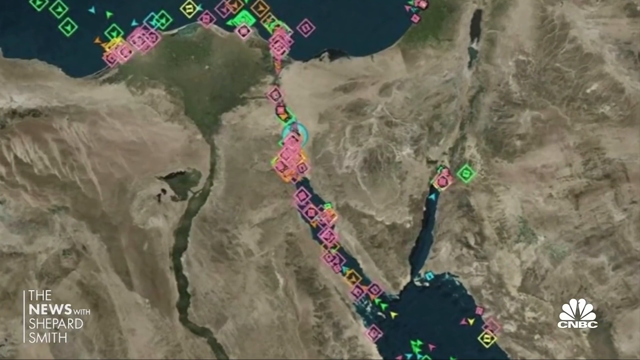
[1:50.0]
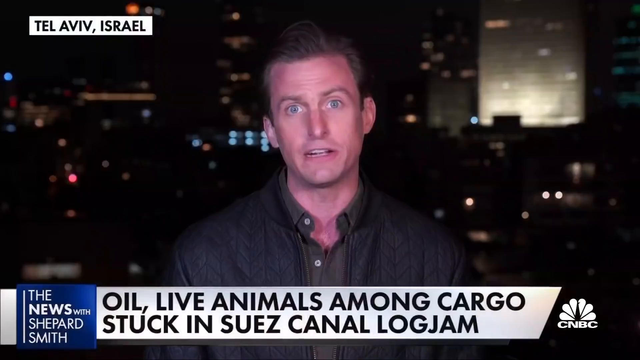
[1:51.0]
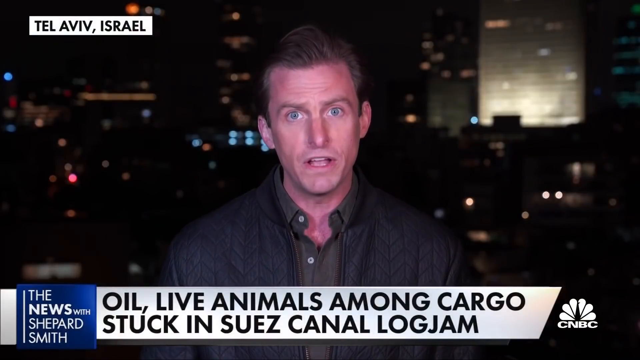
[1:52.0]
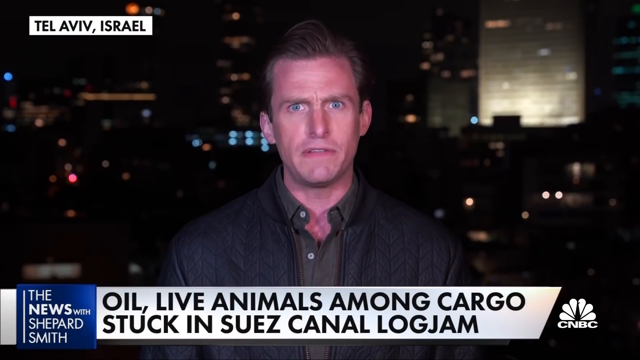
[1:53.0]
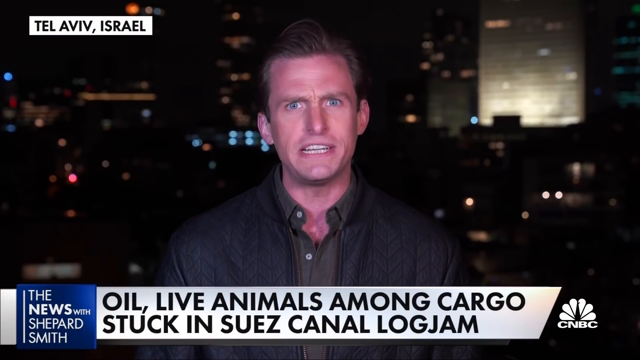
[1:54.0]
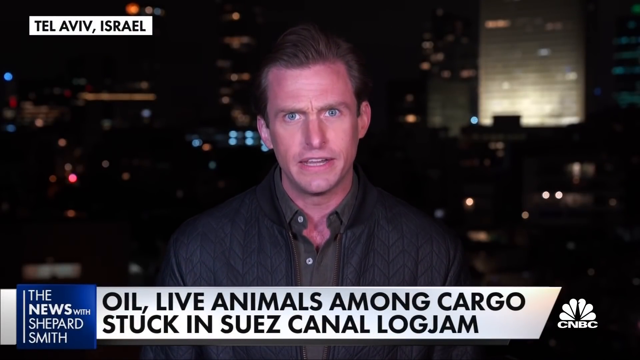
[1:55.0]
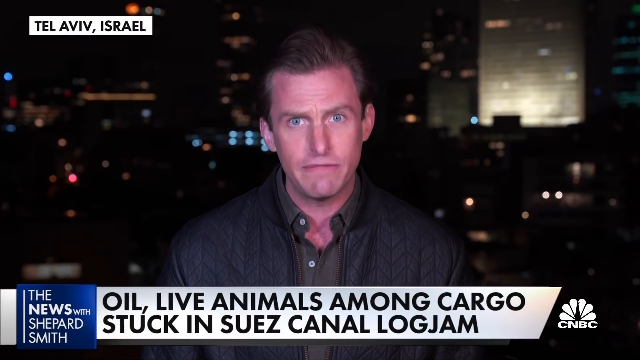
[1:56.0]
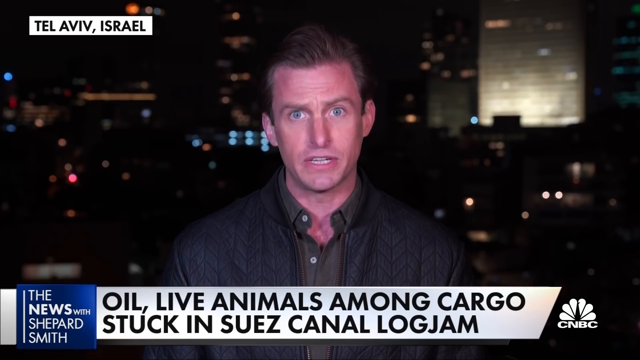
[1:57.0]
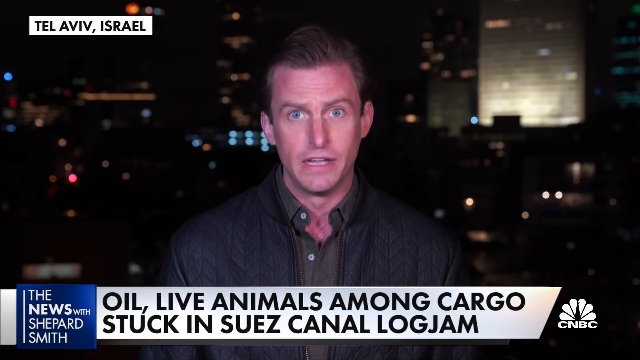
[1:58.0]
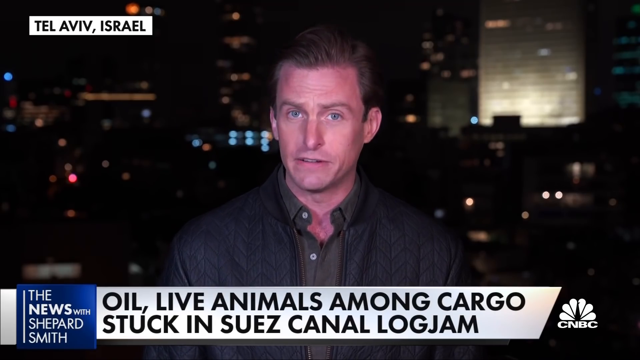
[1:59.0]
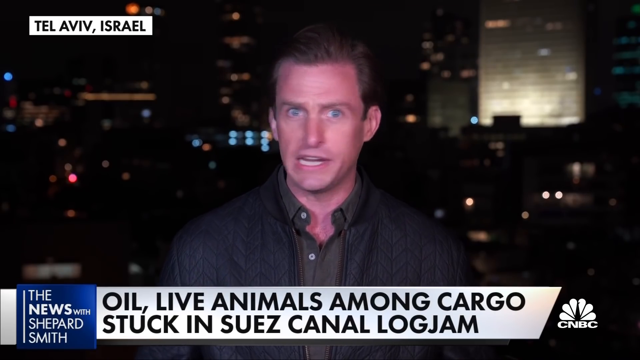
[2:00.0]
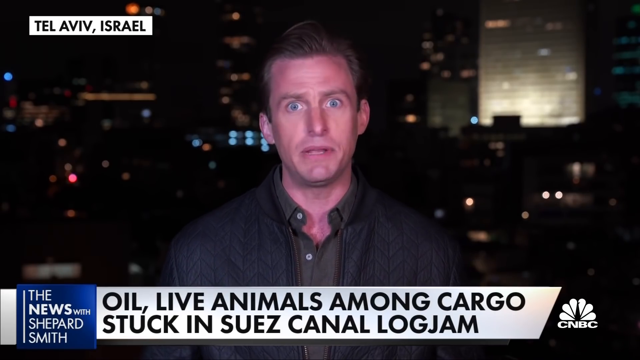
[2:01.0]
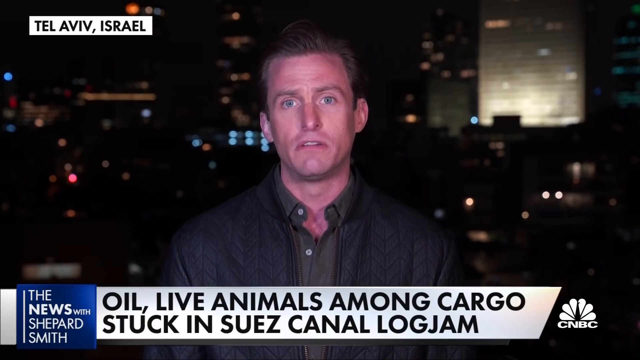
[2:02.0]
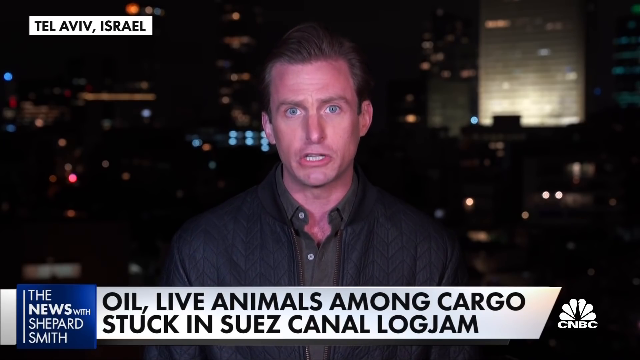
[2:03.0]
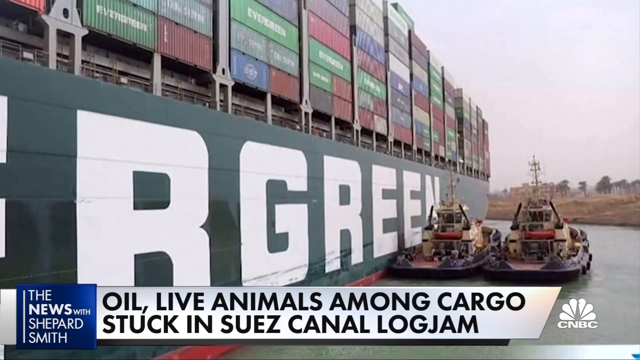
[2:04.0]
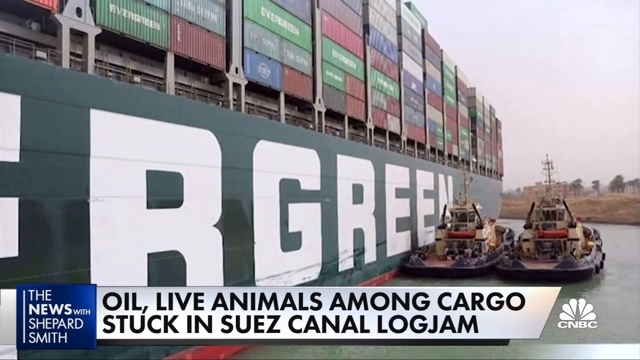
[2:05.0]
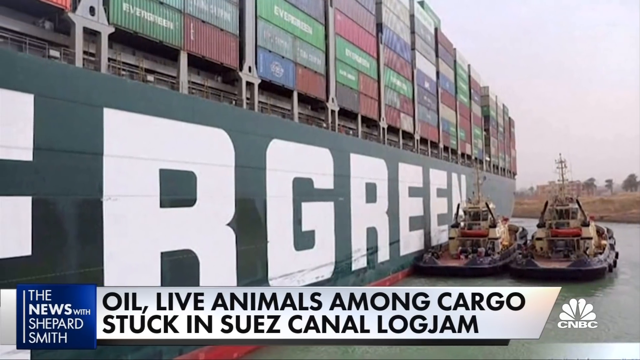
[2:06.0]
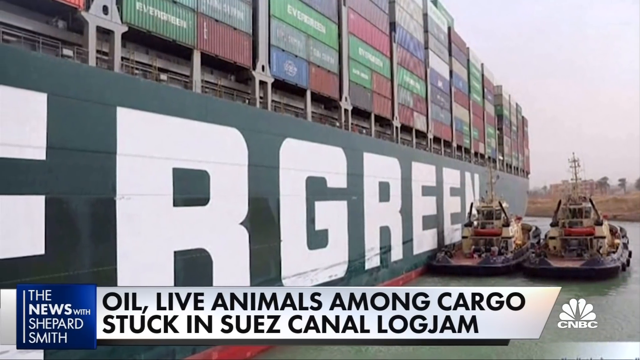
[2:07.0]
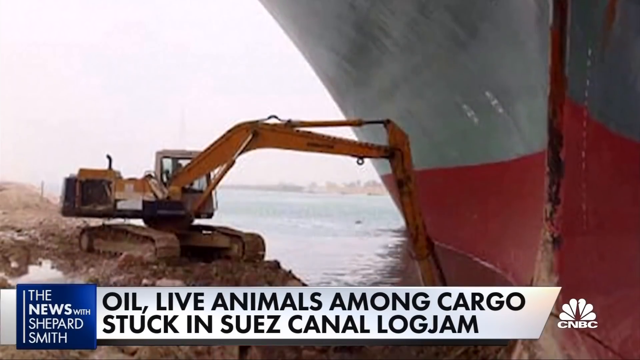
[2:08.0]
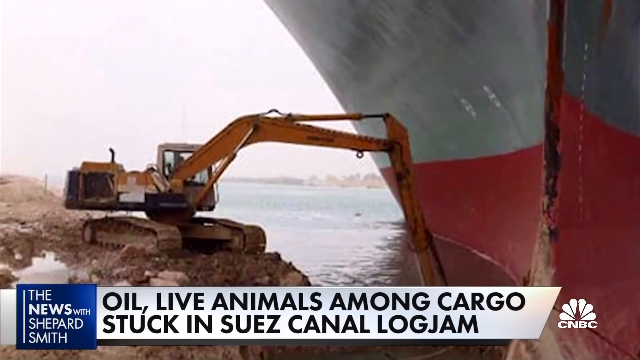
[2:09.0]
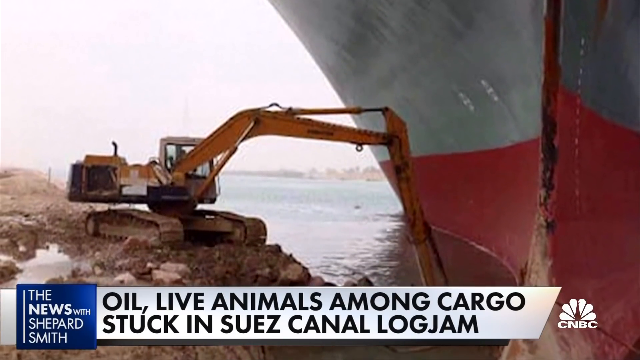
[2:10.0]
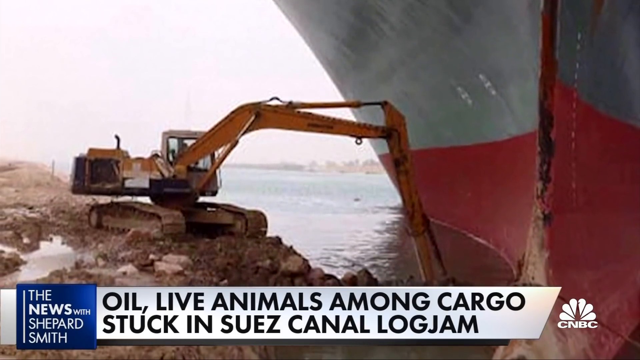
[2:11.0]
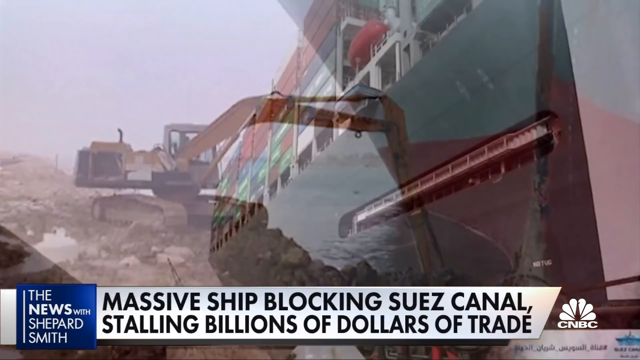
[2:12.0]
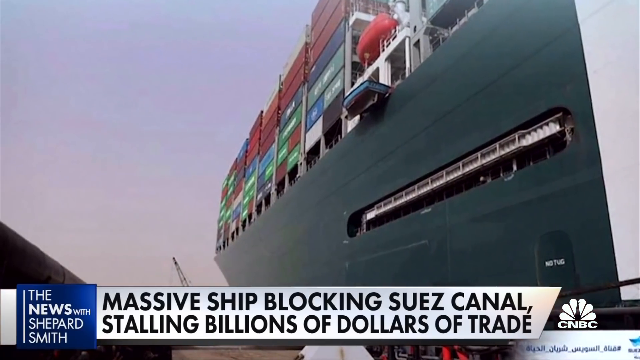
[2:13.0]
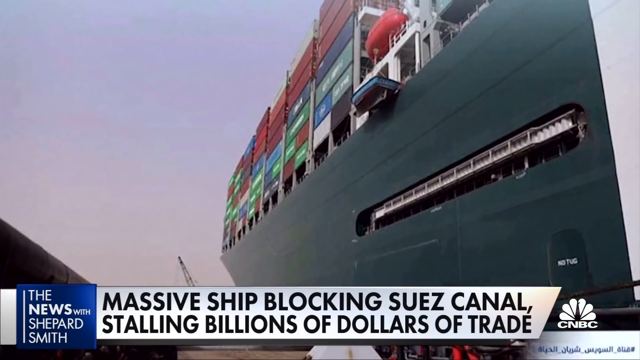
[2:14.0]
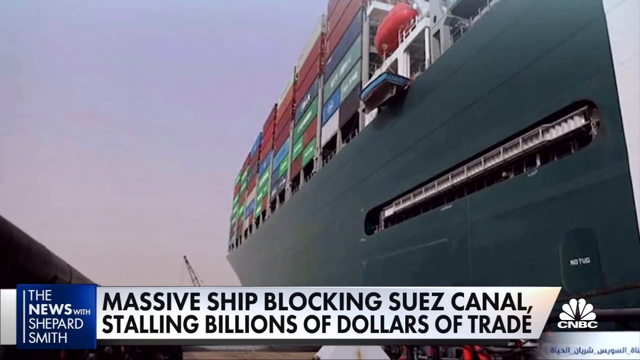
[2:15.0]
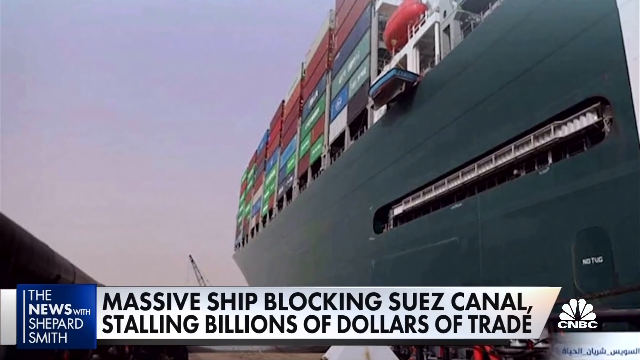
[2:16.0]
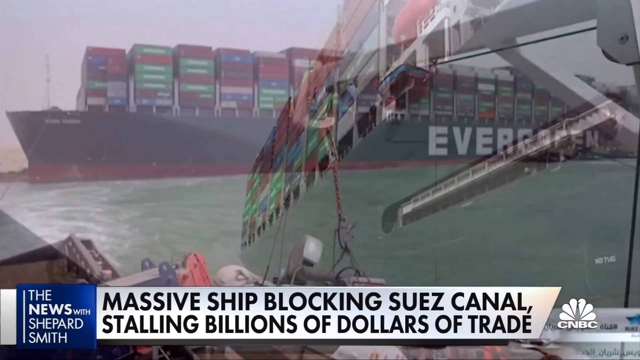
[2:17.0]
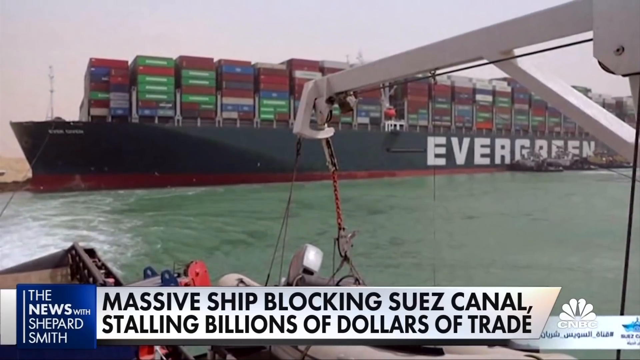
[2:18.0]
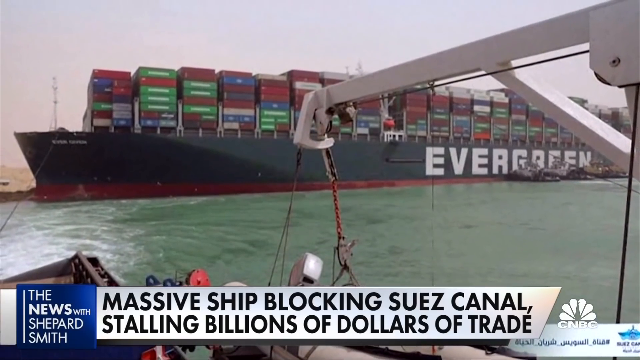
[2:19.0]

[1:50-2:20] The man in Tel Aviv, Israel, appears again in front of the dark city at night, with a few lights on in buildings and the building on the right still lit up. He is dressed the same as before, a white man in a brown jacket and brown shirt. Text reads "oil live animals among cargo stuck in Suez Canal logjam", and the CNBC logo is in the bottom right. He talks directly to the camera, and the shot lingers on him for quite a while. The video then cuts to a close-up of the stuck ship, with two little dinghy boats trying to help free it and a big bobcat digging out land. Text at the bottom reads "massive ship blocking Suez Canal stalls billions of dollars in trade".